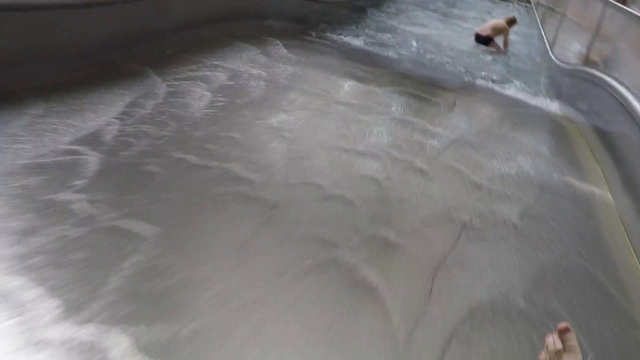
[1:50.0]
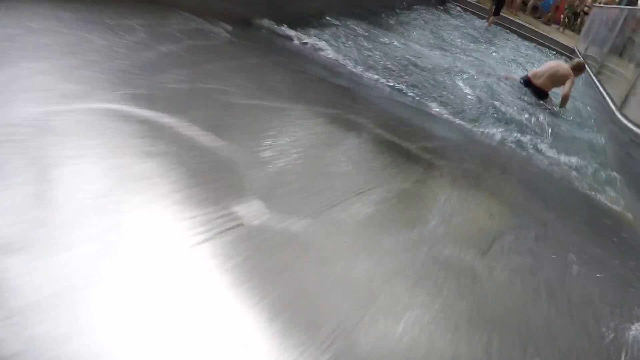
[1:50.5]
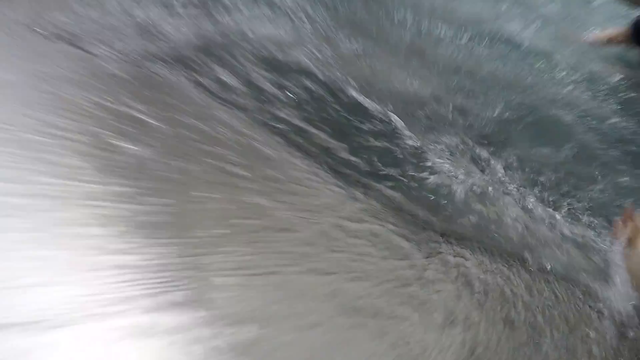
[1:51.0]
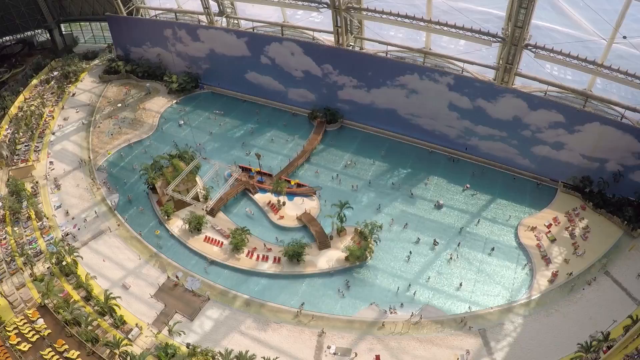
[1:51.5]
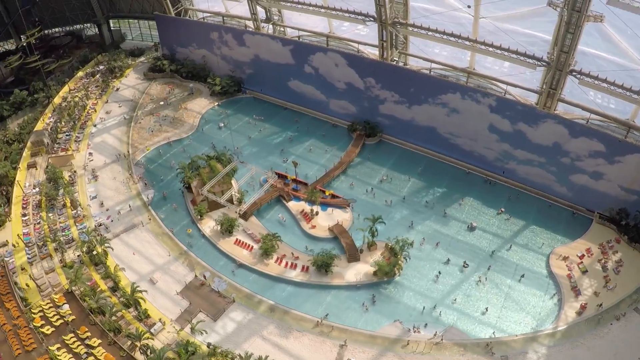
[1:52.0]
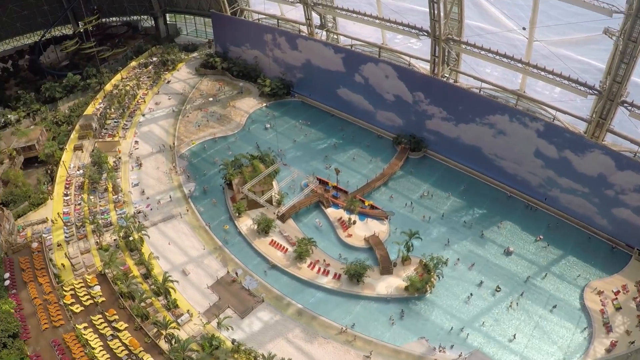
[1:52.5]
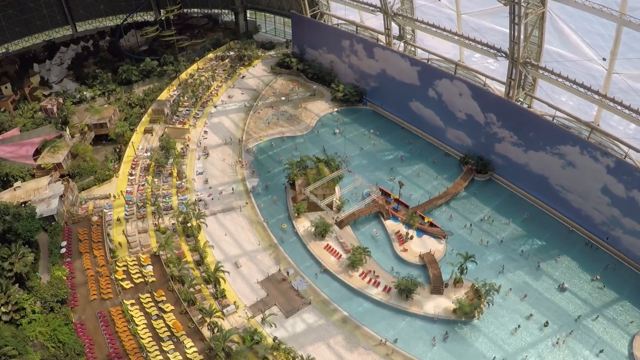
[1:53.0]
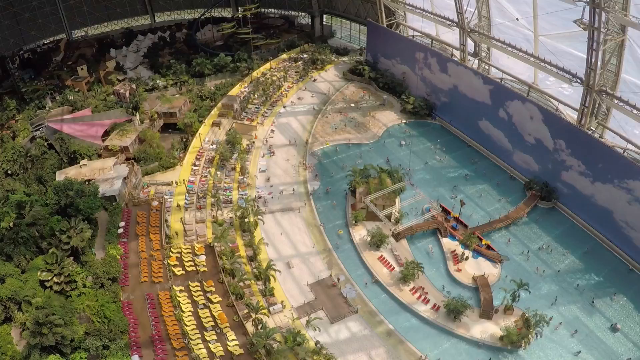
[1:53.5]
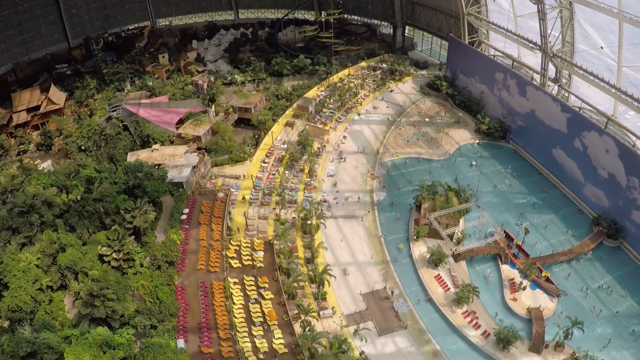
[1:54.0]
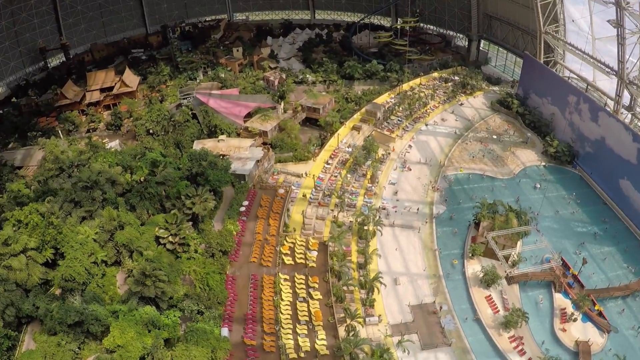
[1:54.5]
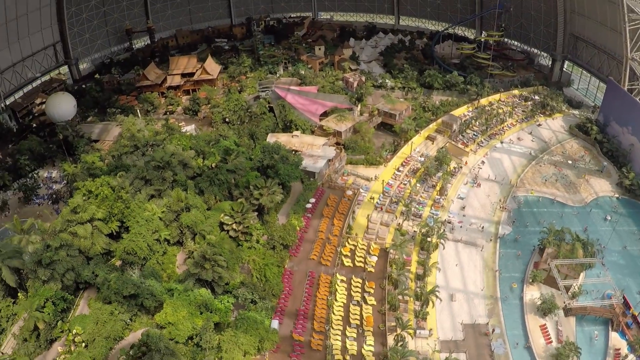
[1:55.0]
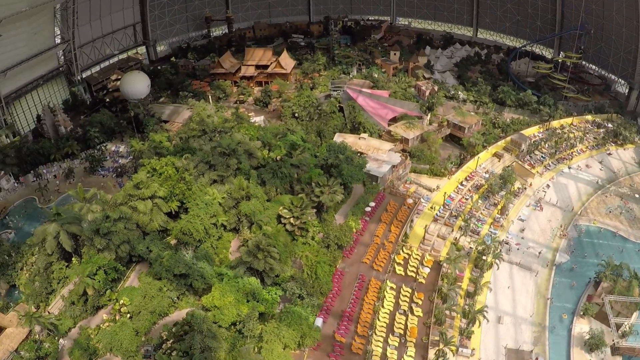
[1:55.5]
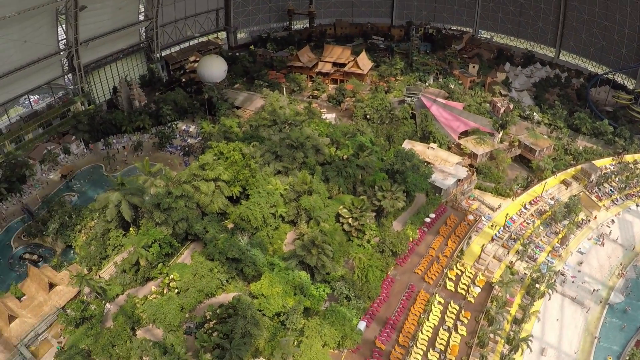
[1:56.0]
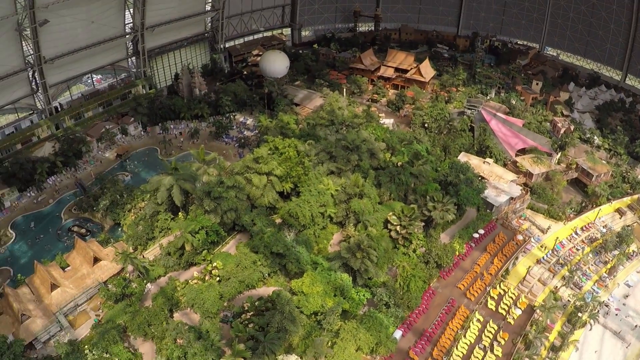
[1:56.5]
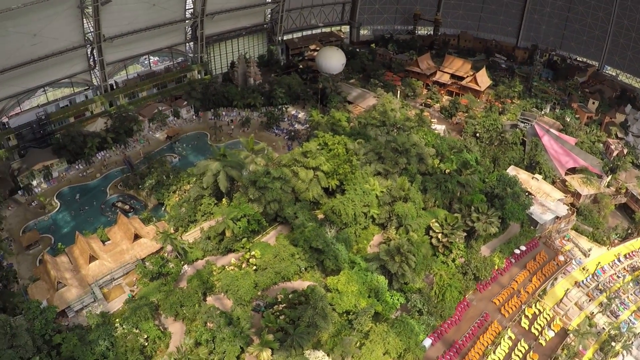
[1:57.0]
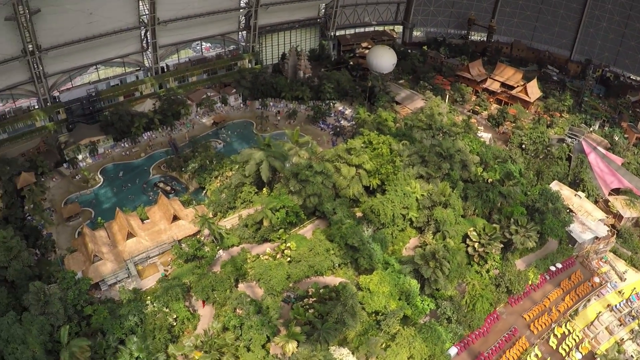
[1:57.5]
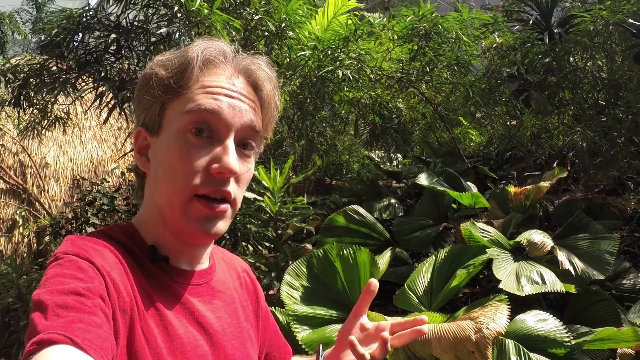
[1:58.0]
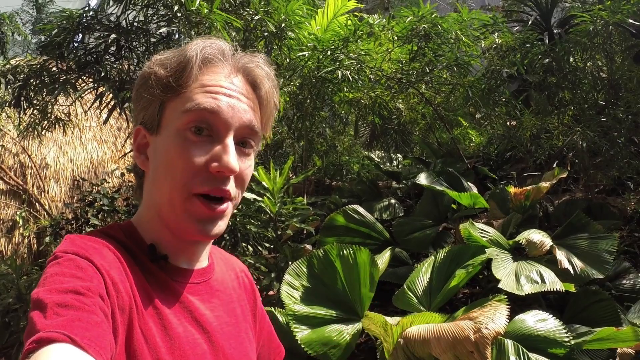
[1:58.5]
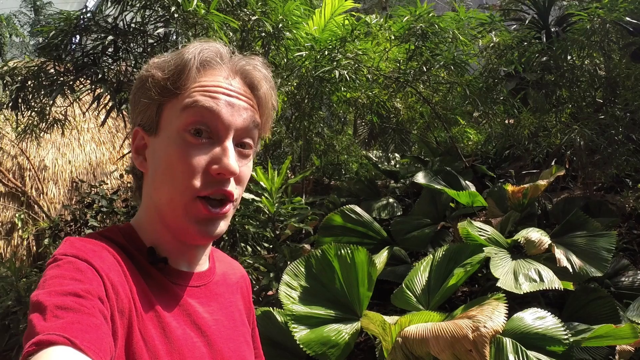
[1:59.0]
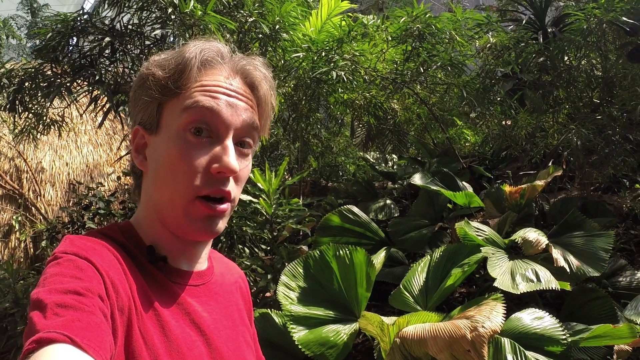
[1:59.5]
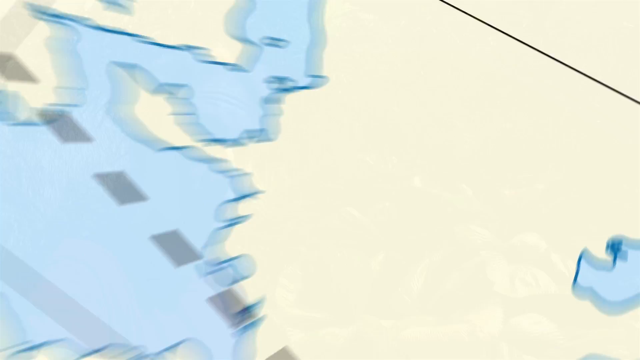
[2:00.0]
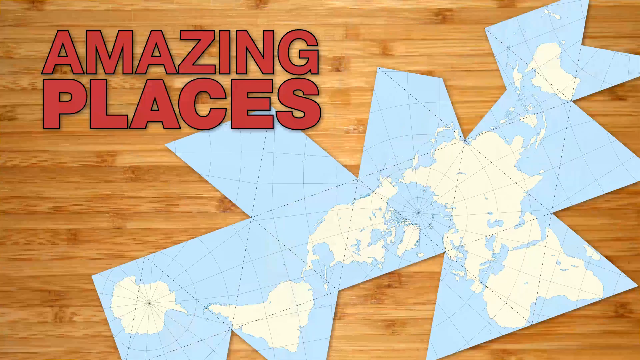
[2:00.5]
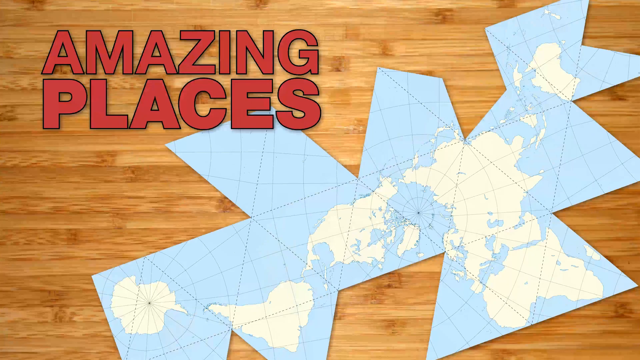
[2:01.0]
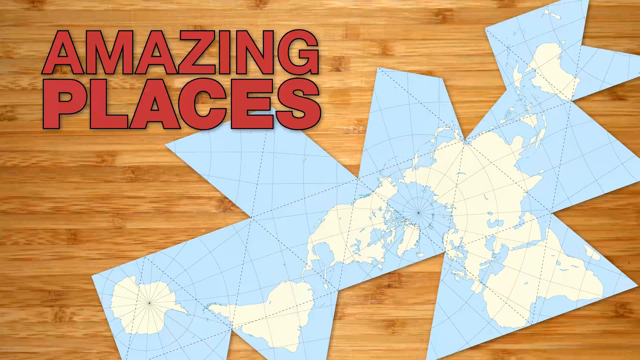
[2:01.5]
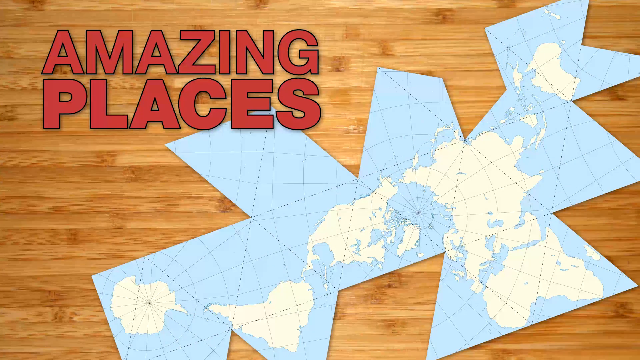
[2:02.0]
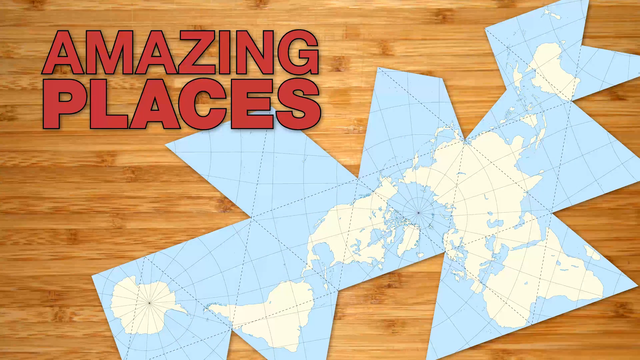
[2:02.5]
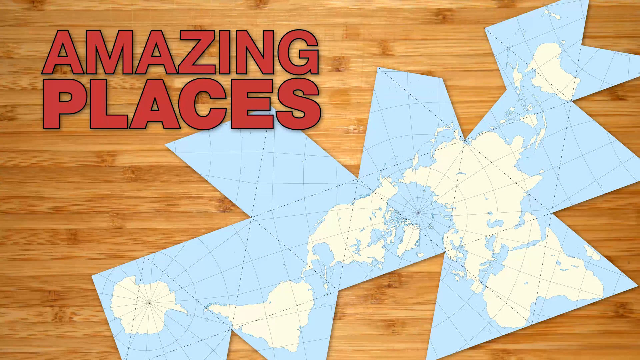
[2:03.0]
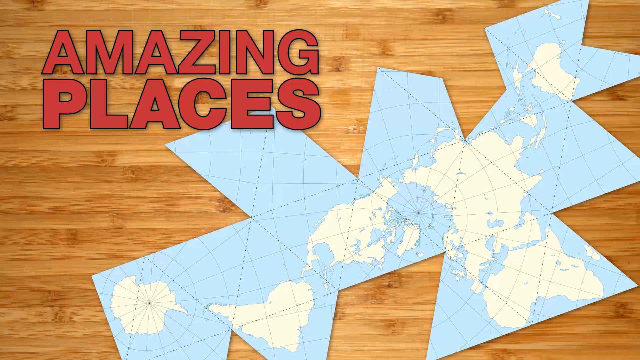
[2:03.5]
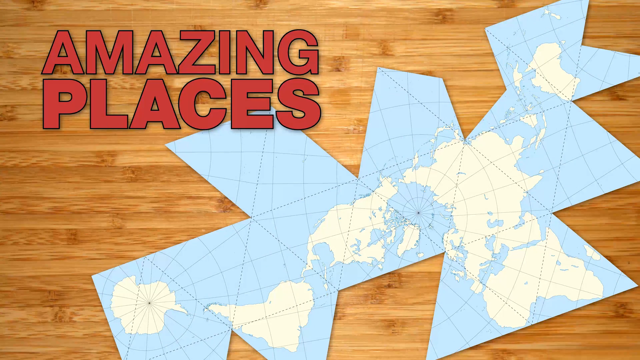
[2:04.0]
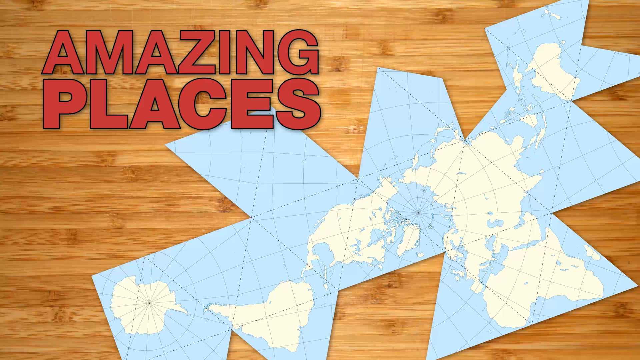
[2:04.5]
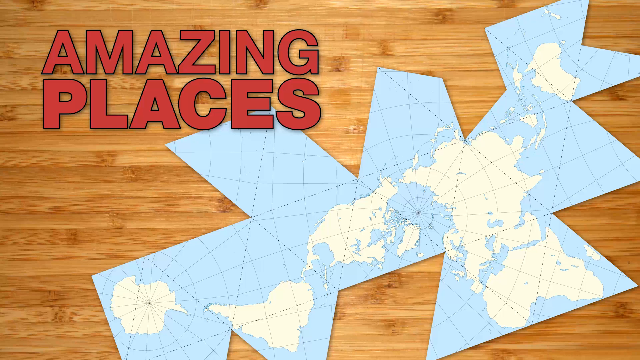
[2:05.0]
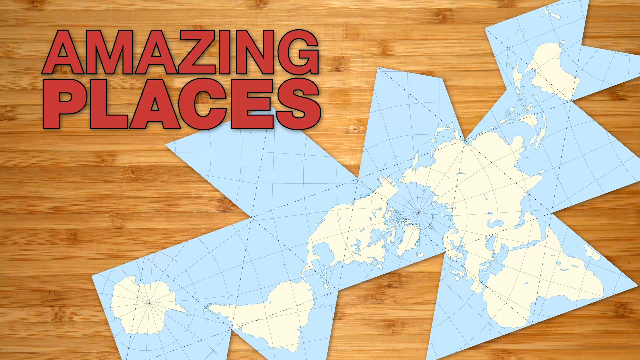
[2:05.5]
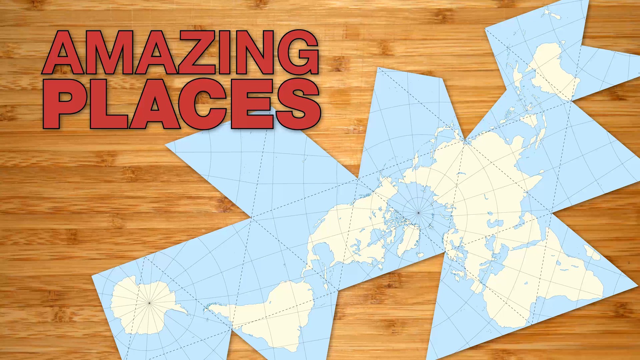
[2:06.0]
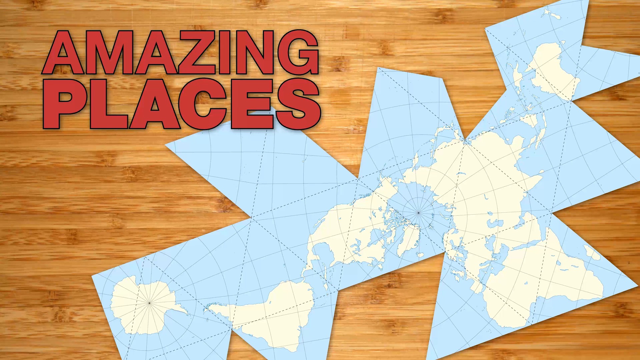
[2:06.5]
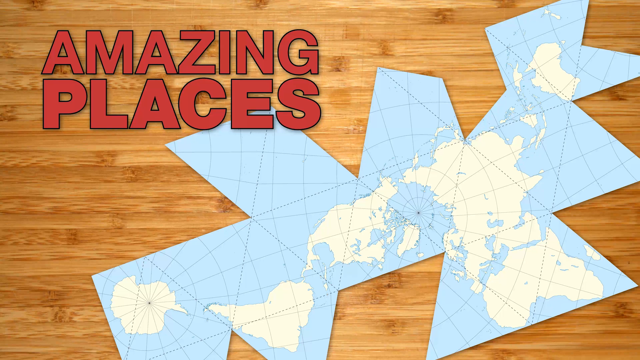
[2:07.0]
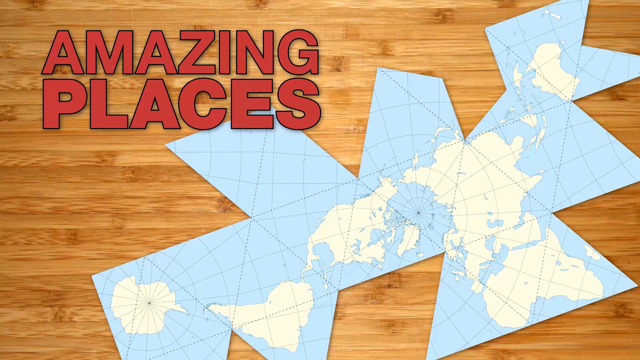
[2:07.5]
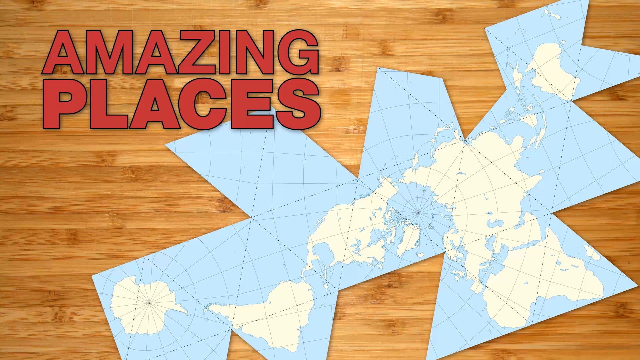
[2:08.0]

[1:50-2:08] The view goes down a water slide inside the dome, then shows a large pool and beach area. The pool has a half-circle-shaped island in the center with trees and some chairs set out on it, and a walkway goes from the island over to the back wall, which has blue sky and white clouds painted on it with some windows above. The beach is a half-circular design with white sand, with many chairs laid out on different areas. Behind the beach area, to the left, are many green, lush treetops and rooftops, and a white globe is in the back next to the back wall. Many yellow, orange and pink chairs are laid out. In the background, next to the wall, is another pool, with three chalet-type buildings in front of it in a sandy area; their roofs are a light brown color, the same as the sand, and there are trees in the background of that area.